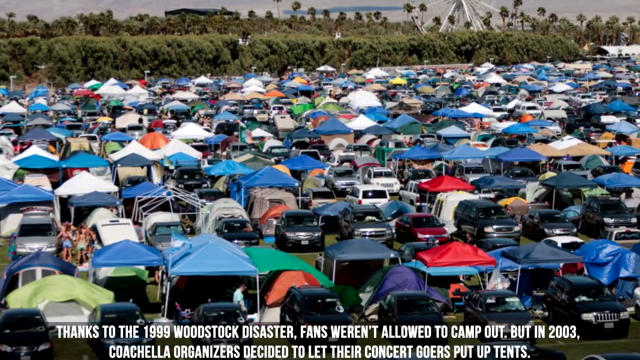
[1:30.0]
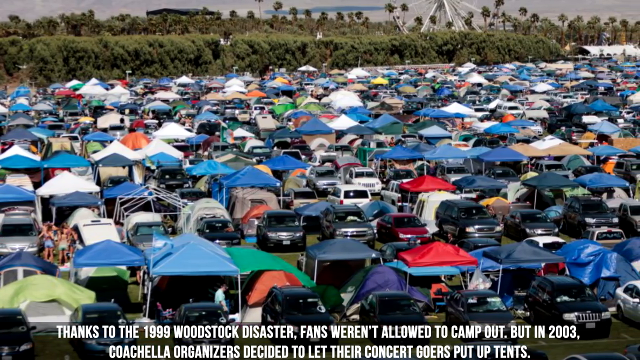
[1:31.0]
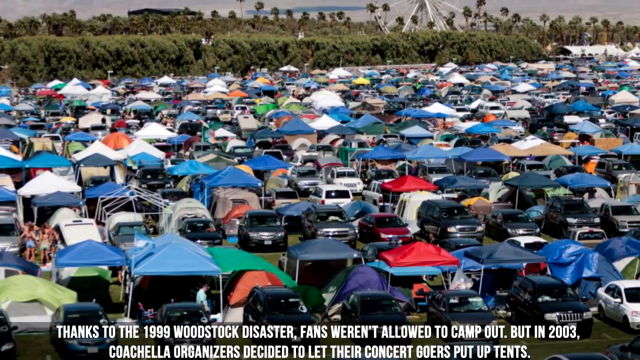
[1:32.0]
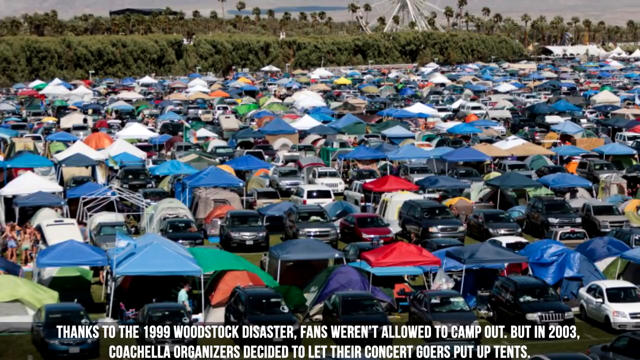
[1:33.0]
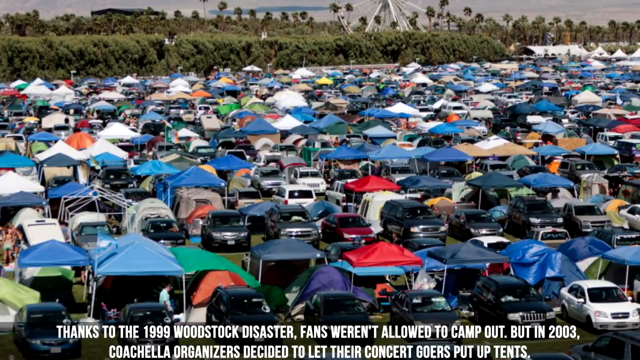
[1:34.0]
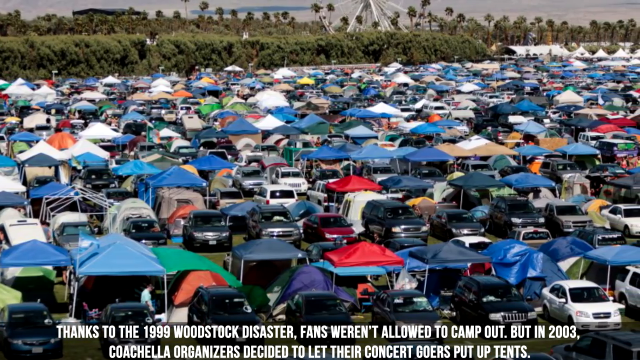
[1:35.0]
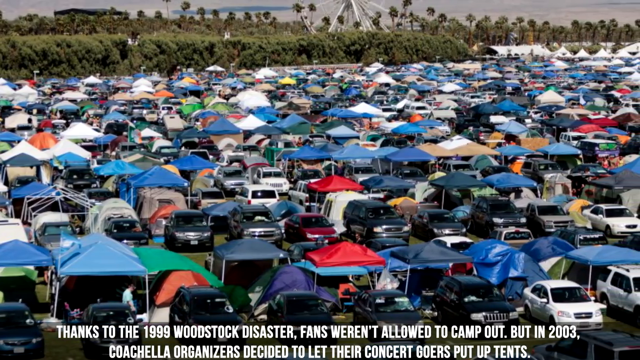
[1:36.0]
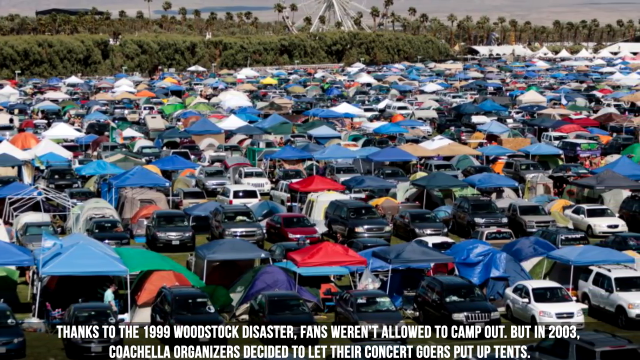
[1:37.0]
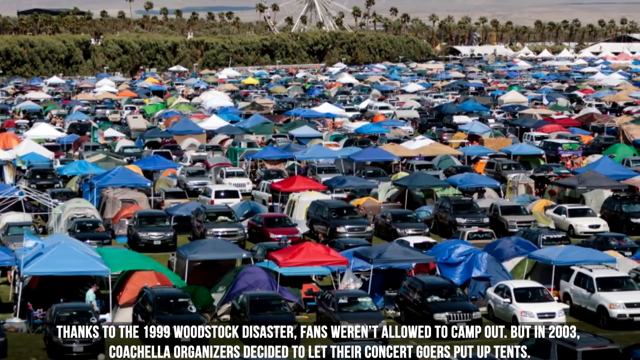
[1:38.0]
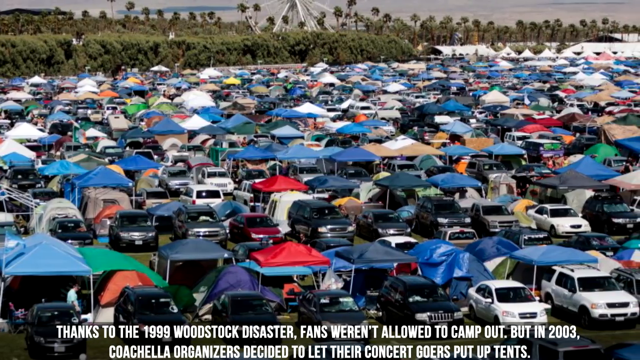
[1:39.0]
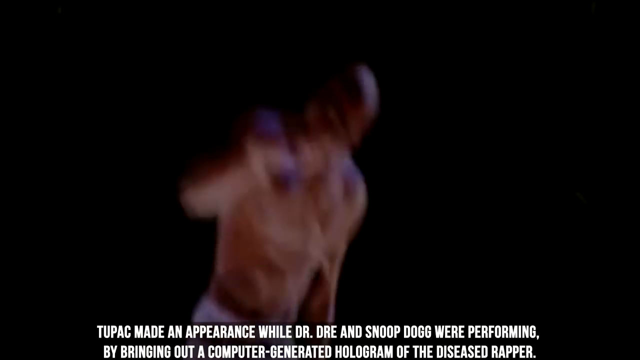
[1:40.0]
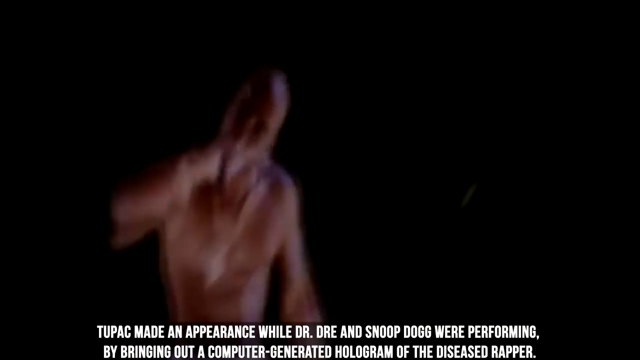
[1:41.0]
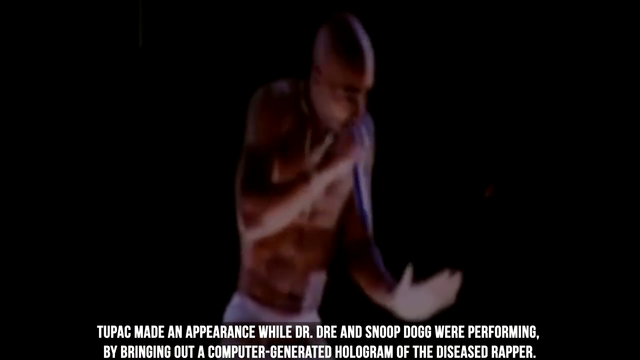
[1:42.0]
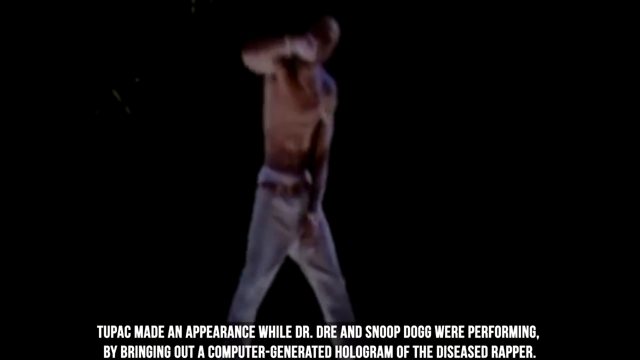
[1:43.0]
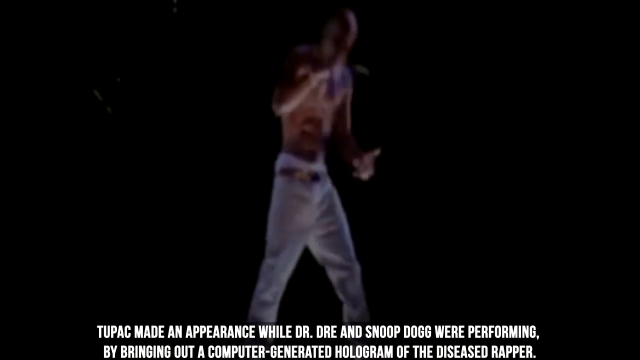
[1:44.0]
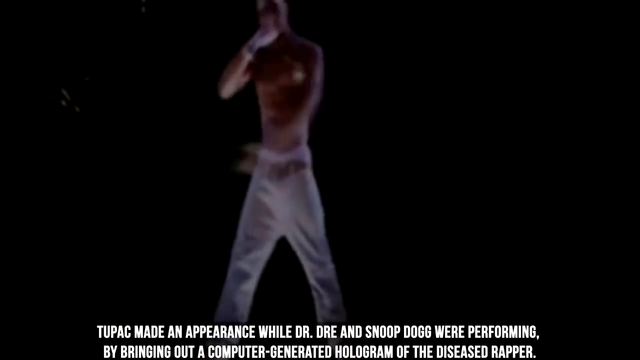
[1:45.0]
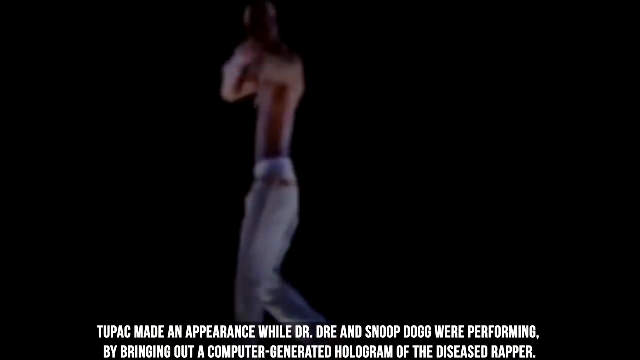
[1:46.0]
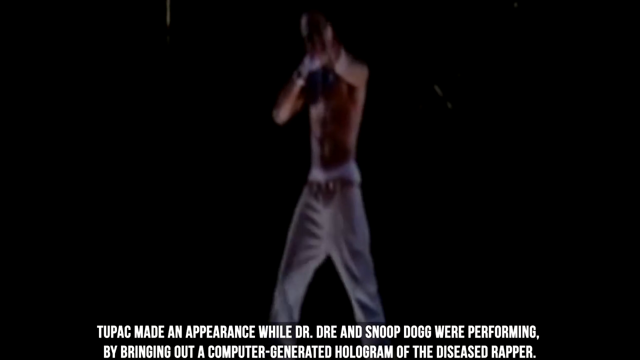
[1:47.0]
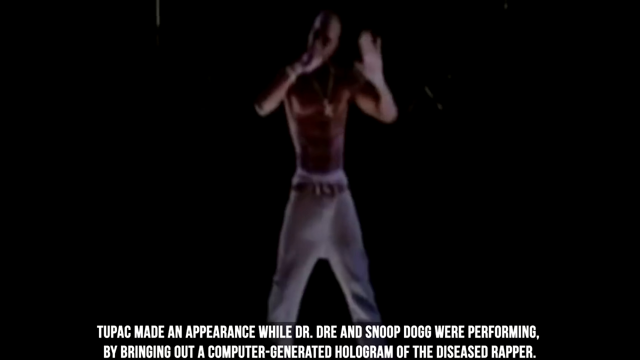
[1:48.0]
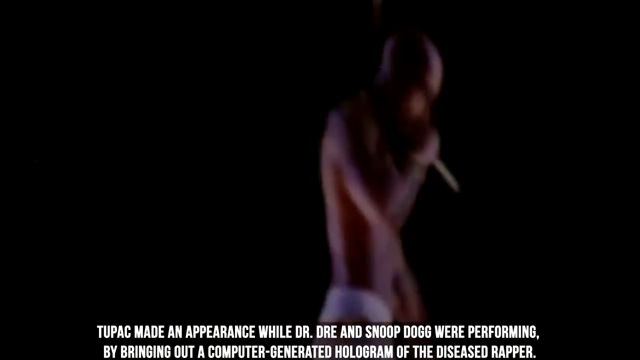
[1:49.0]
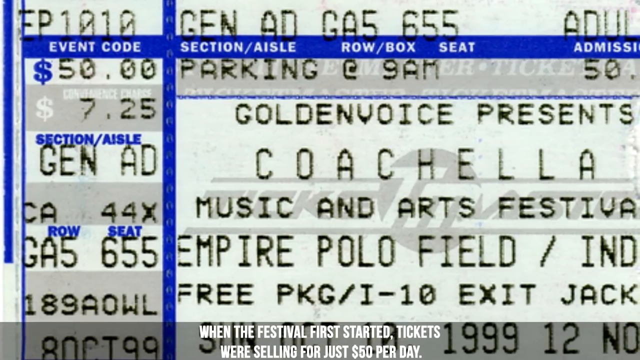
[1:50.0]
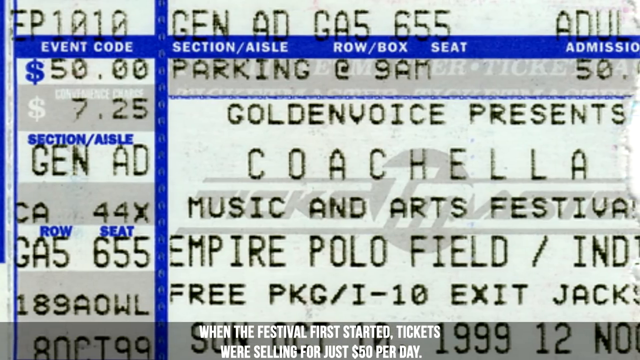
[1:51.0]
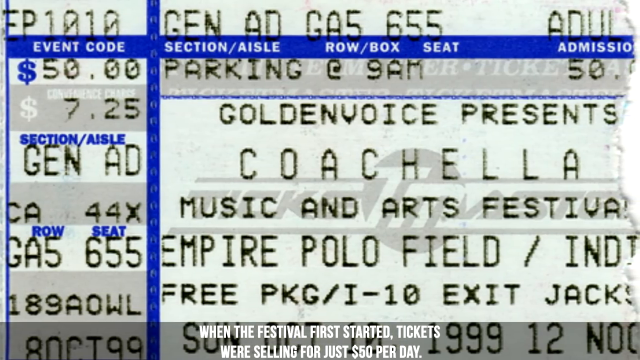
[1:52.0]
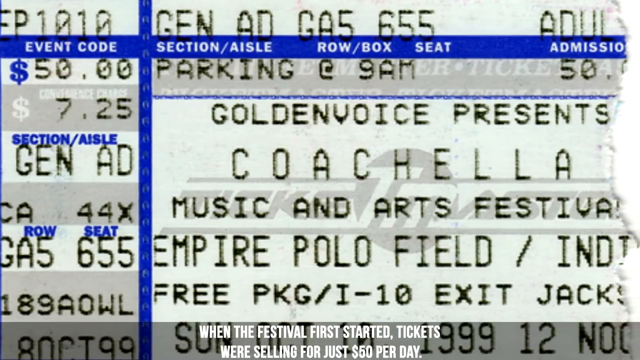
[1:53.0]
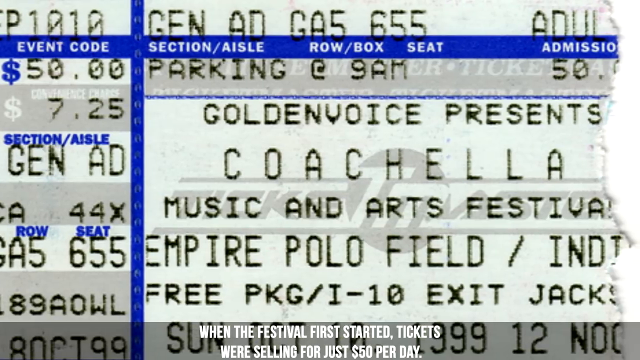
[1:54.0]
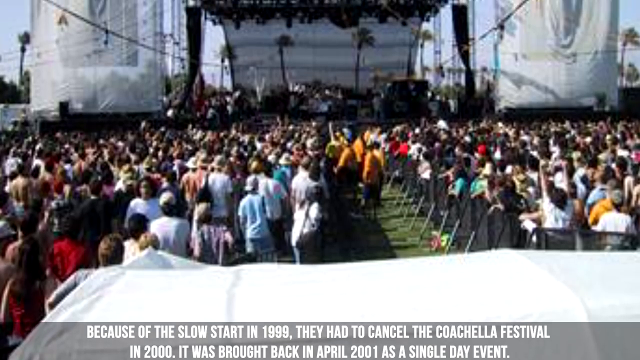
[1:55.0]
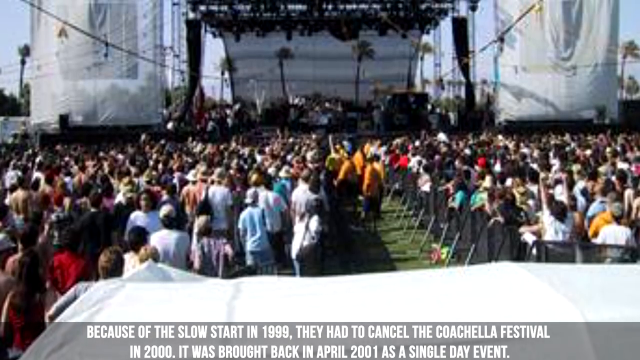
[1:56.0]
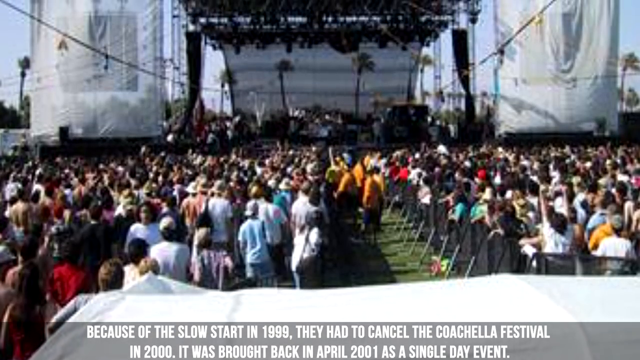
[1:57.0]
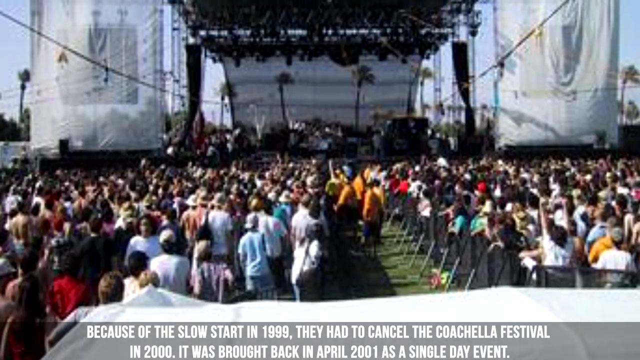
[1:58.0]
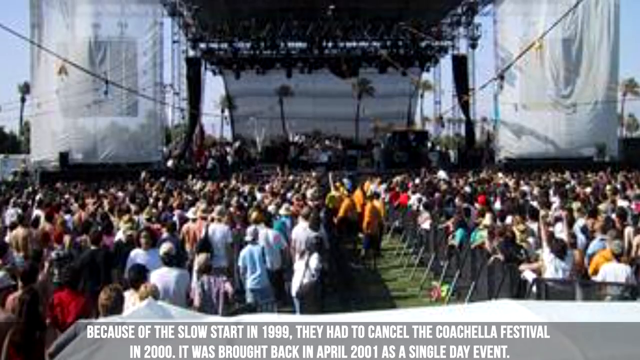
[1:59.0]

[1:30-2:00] A still image shows what looks like a sort of car park or camping area at the Coachella festival: a mass sea of what look like the tops of tents, their canvas or tarpaulin, with some cars among them. White capital text at the bottom reads "thanks to the 1989 Woodstock disaster, fans weren't allowed to camp out in 2003". The camera moves from left to right across the tents and cars. A cut leads to a kind of blurry moving image of what looks like a black rapper performing, apparently shirtless, against a black background that looks like the night sky. Text on screen reads "Tupac made an appearance while Dr Dre and Snoop Dogg were performing". As the image gets a bit clearer, the shirtless man holds a microphone in his right hand, arm bent at the elbow to bring it to his mouth, and holds his left arm out in front of him with fingers stretched and palm facing the ground. A medium shot of the same rapper shows him in white trousers, still holding the microphone close to his mouth while he moves his body and his hand moves up, down, left and right in very quick movements that almost blur; he starts to walk. Another close-up shows him side on, pointing his right elbow out toward the crowd while holding the microphone close to his mouth. Then there is what looks like a close-up of a ticket with blue lines across it that seem to be headings such as event code, section and aisle; as the camera moves left to right it reads "Coachella music and arts festival". A cut leads to an image from behind a crowd, with text at the bottom reading "because of the slow start in 1999 they had to cancel the Coachella festival". A stage in the distance has sort of white cloth on either side of it in front of screens. The crowd is in sort of pens to the left and right, with a stretch along the centre that has green at the bottom, maybe grass. The camera moves up the image to the top of the stage, showing black equipment, probably lights and speakers.